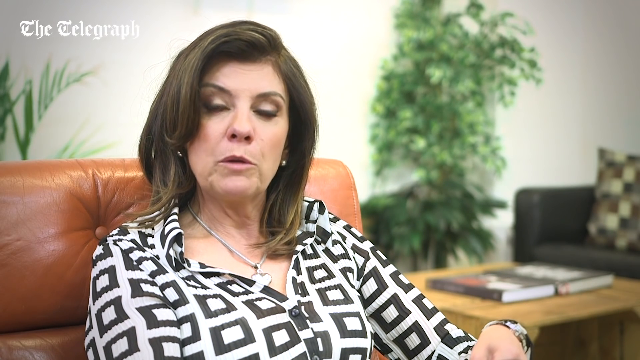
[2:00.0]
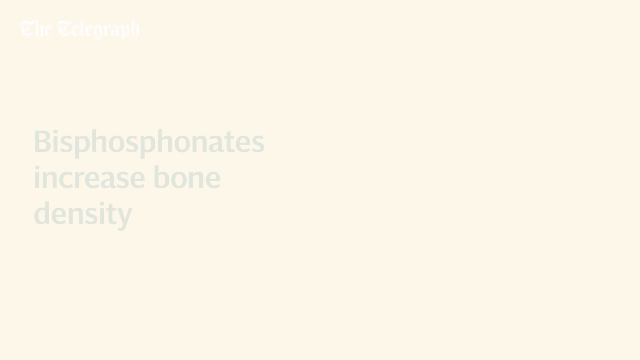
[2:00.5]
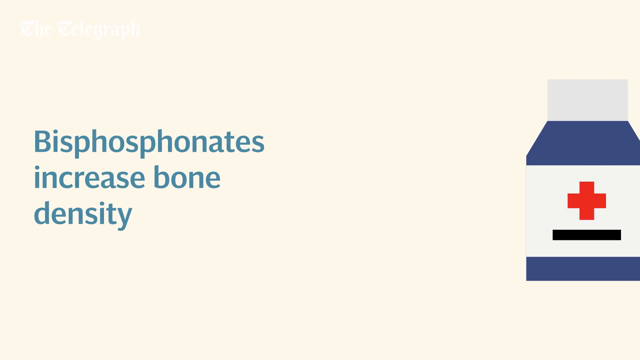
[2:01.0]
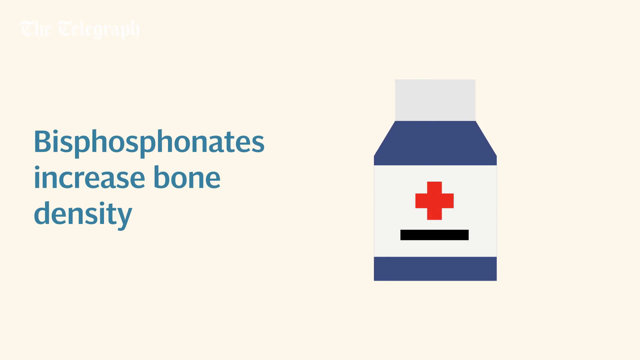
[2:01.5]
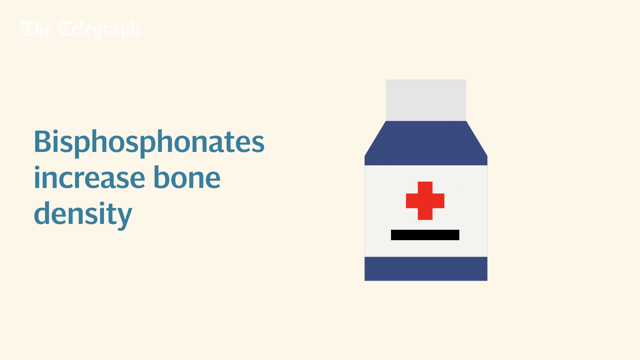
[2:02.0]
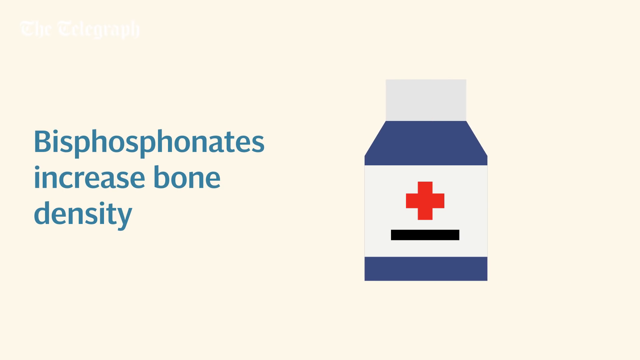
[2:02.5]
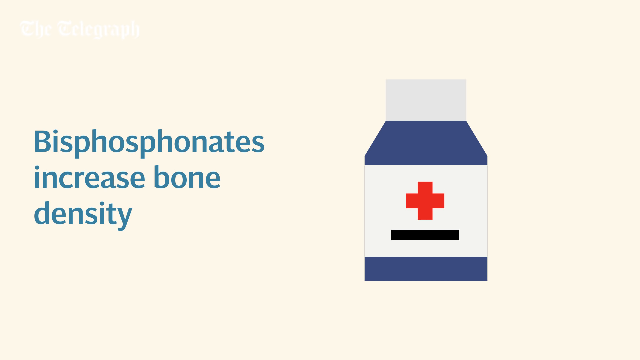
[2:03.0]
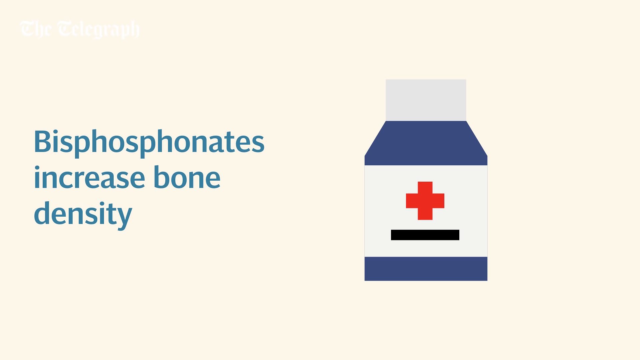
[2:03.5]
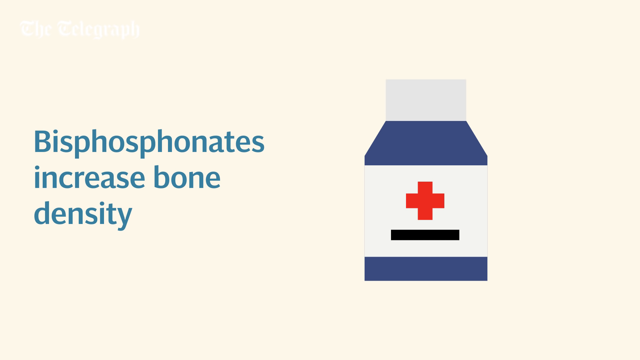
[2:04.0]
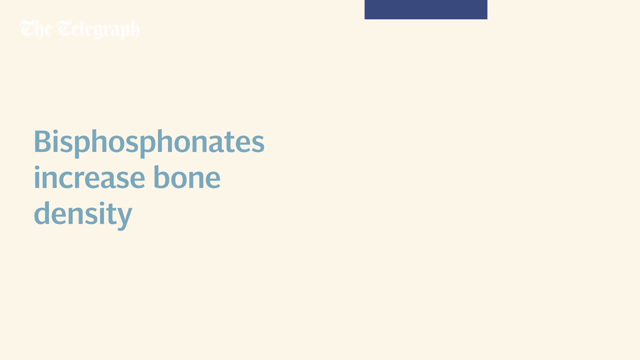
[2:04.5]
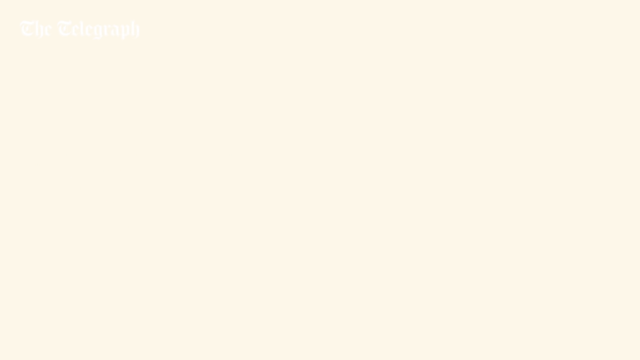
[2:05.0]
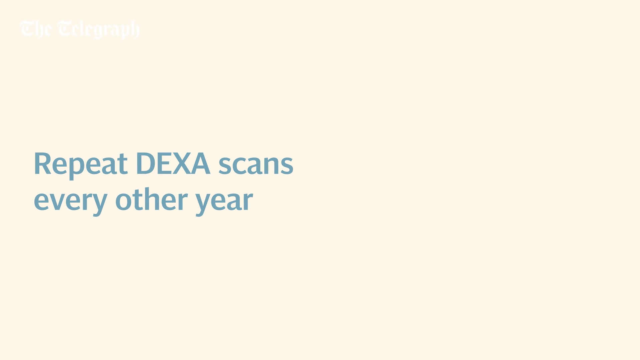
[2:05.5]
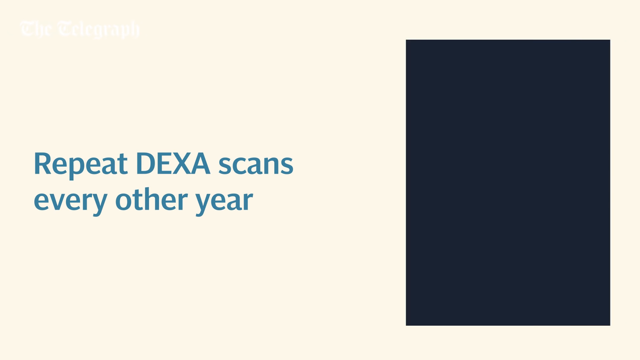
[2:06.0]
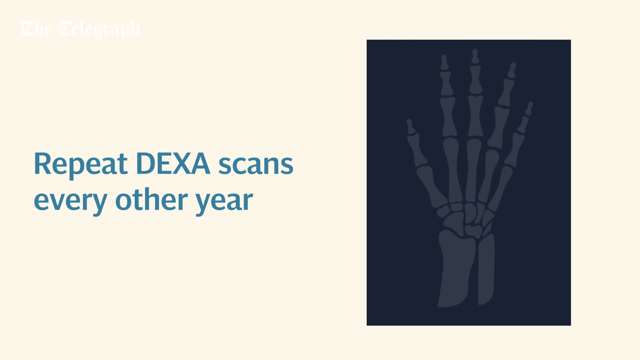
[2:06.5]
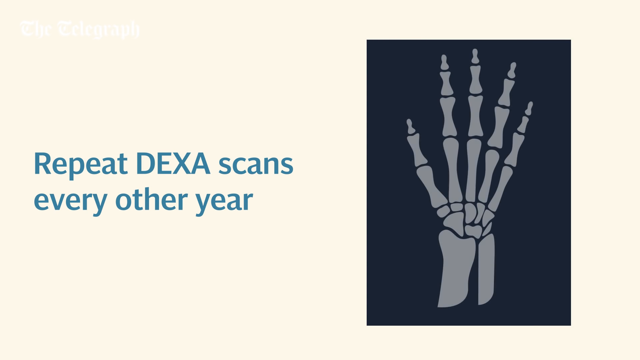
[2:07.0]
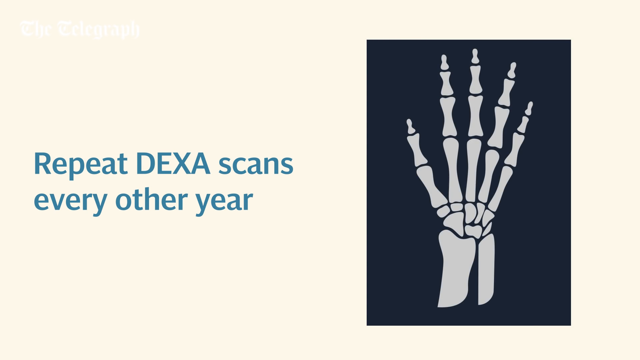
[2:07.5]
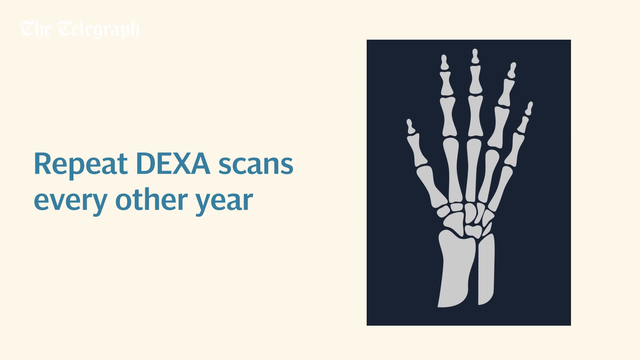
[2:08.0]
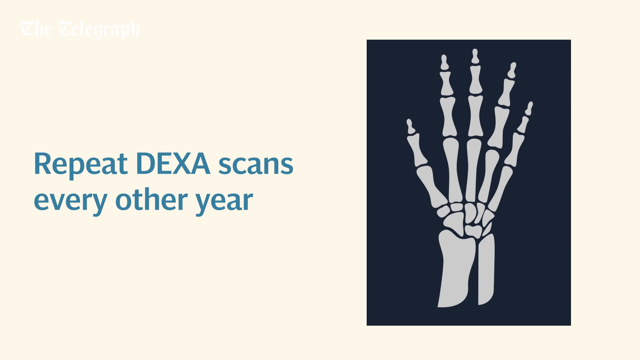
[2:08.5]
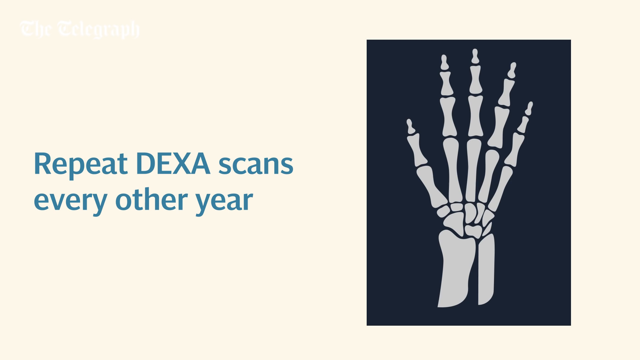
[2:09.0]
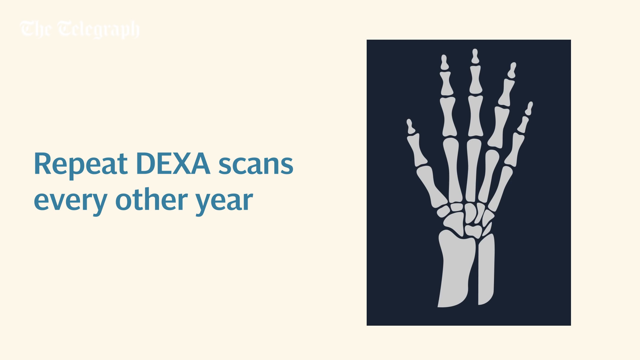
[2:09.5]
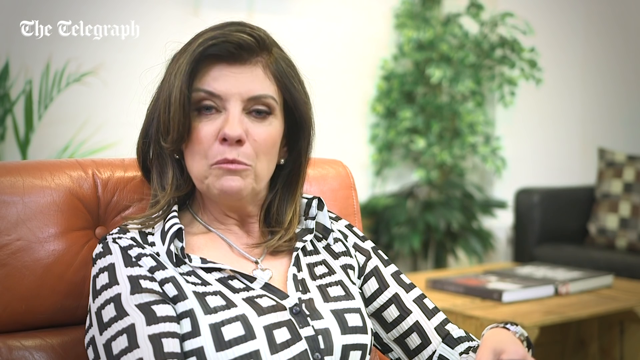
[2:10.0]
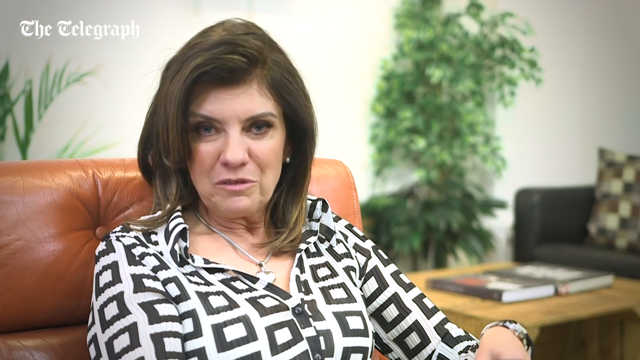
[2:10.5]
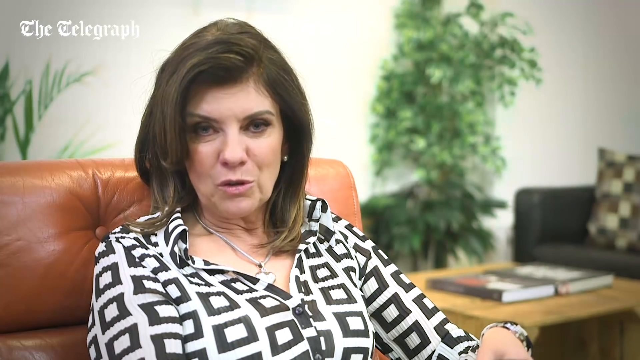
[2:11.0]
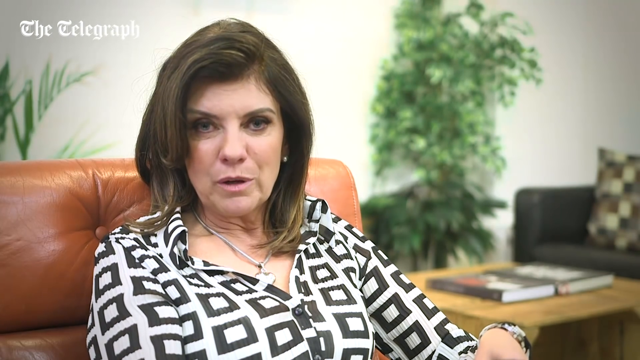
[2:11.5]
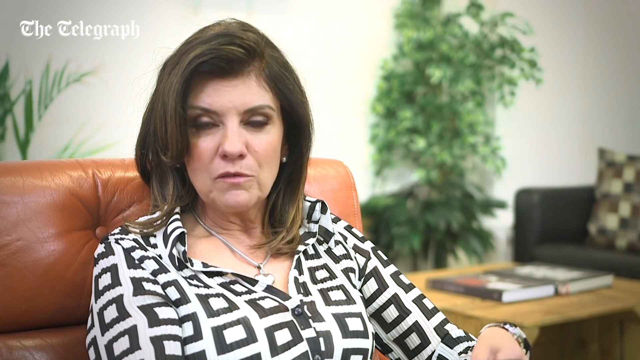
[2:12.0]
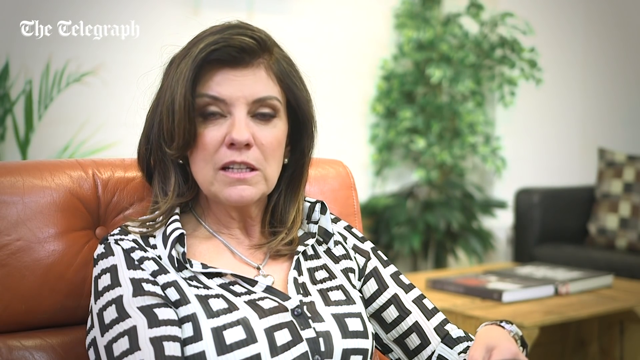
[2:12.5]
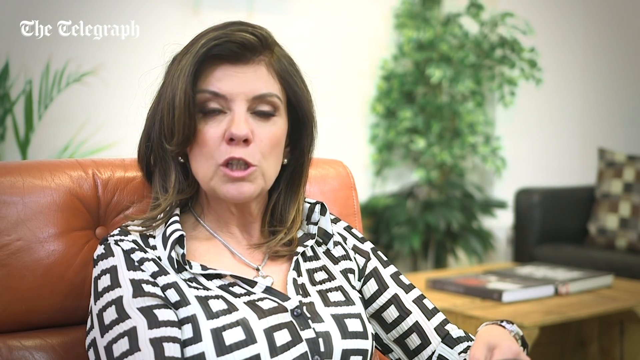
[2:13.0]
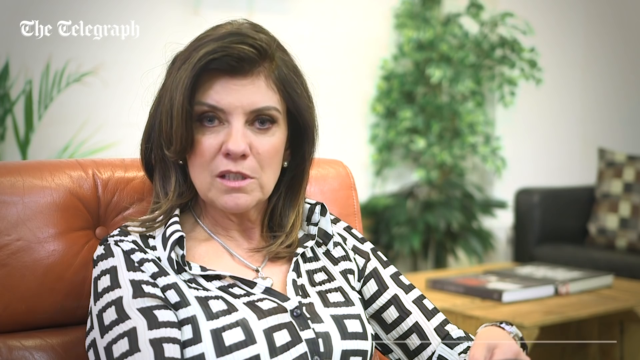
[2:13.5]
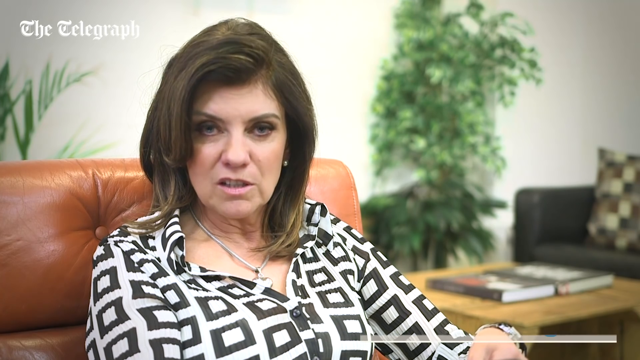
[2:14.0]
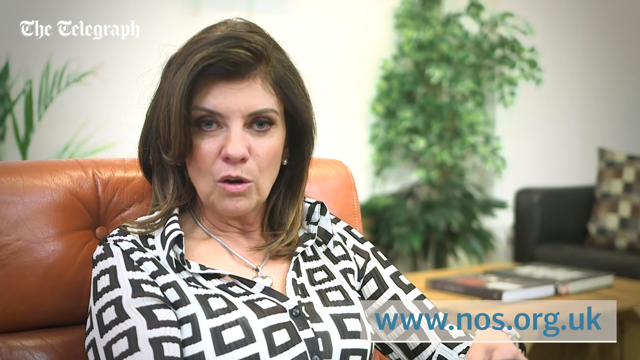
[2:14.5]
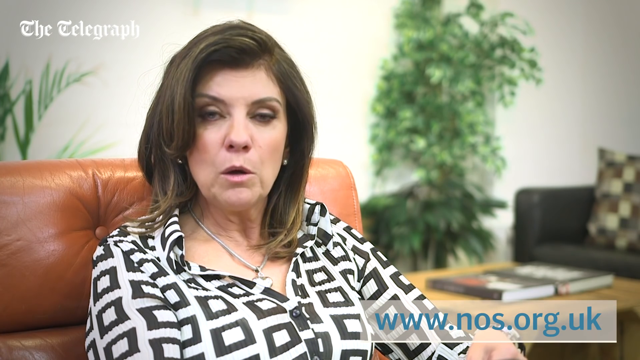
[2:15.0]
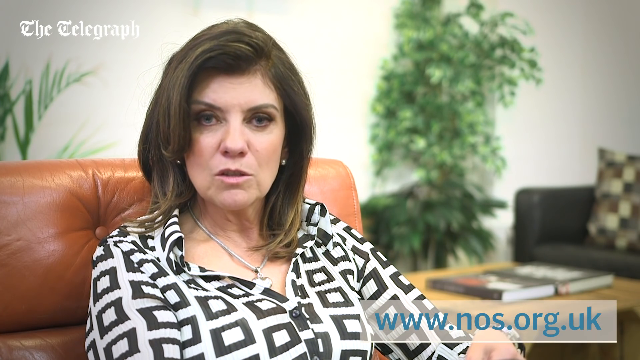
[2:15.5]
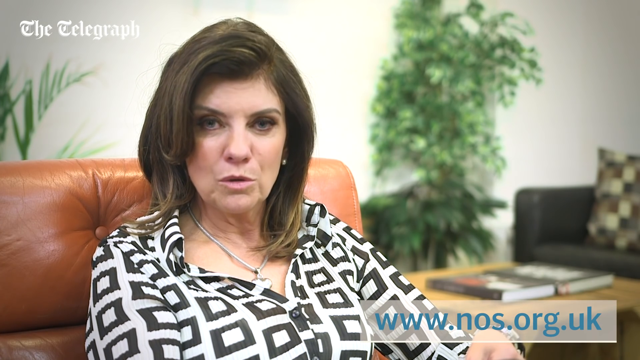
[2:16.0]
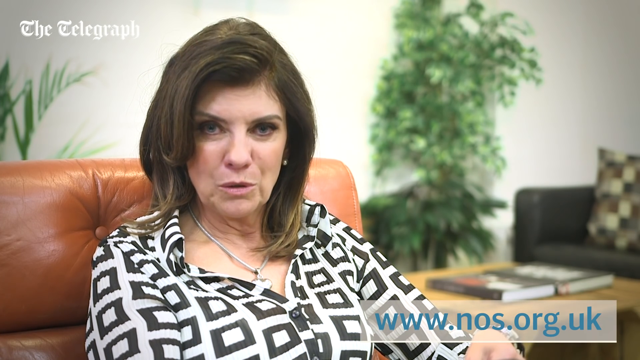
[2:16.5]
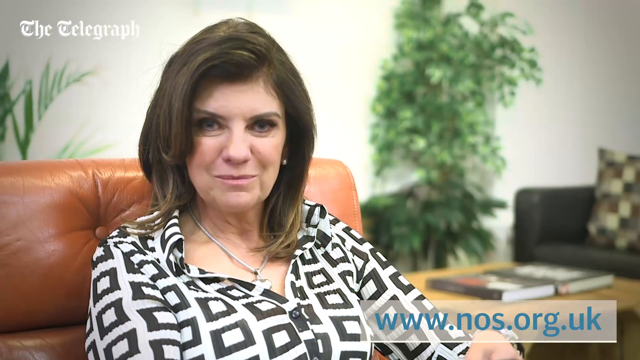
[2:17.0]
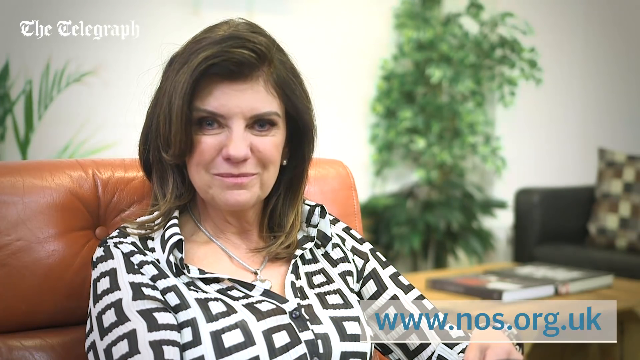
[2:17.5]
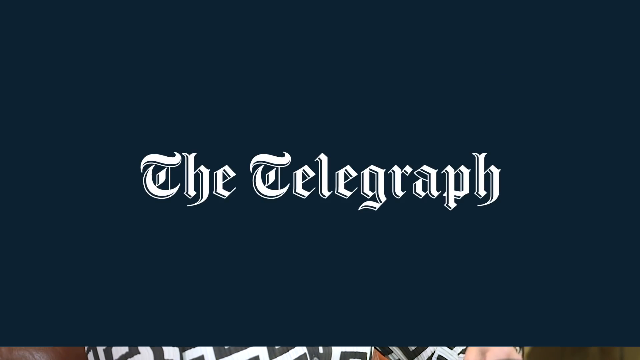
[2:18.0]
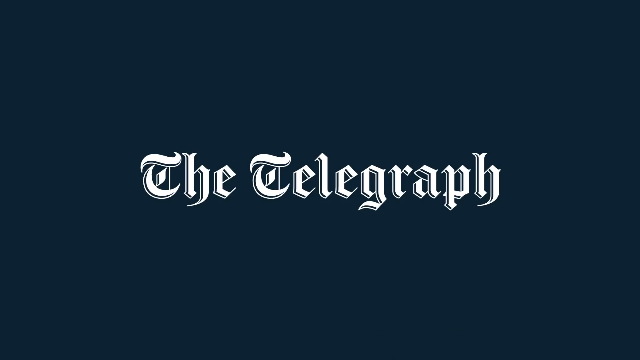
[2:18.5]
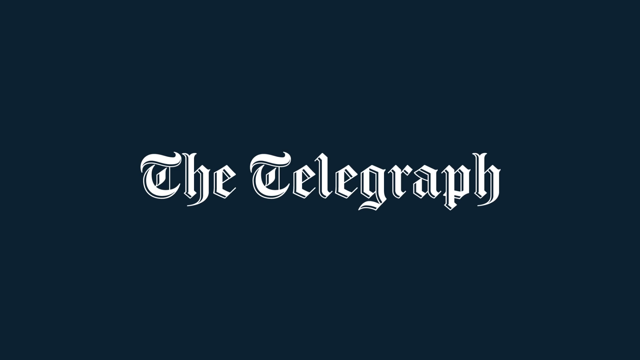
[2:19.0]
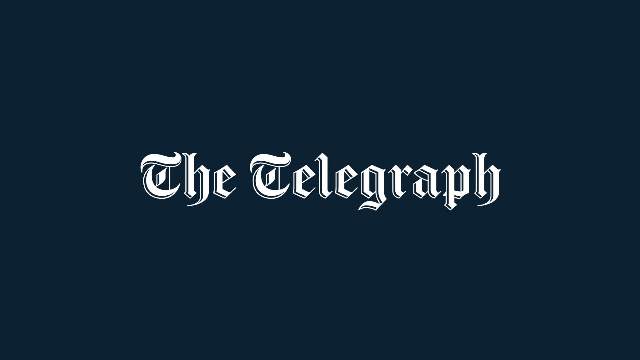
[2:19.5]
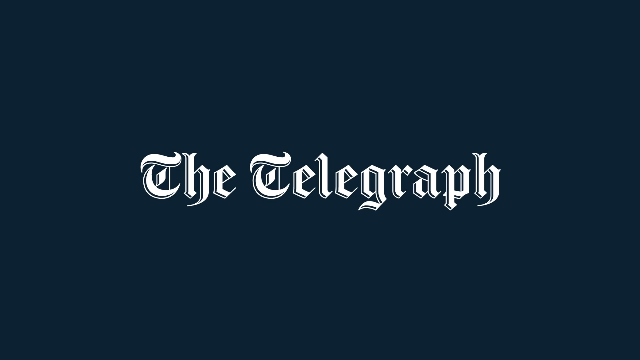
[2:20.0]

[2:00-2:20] Text on the left-hand side of the screen reads "bisphosphonates increase bone density", and a picture comes in from the right to the centre right that looks like a medicine bottle: blue with a grey lid and a white label with a red cross and a black underline below it. The bottle shoots up off the top of the screen until it disappears, and a navy box appears from the right-hand side. Blue text on the left reads "repeat DEXA scans every other year", and the blue box on the right contains a skeleton hand showing the bones of the hand and wrist. The video moves back to the doctor, who talks directly to the camera, and a website, "www.nos.org.uk", appears in the bottom right of the screen. The screen then turns completely navy, and the Telegraph logo appears in white in the centre.